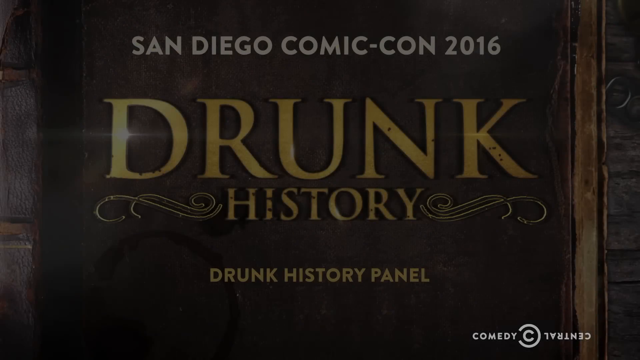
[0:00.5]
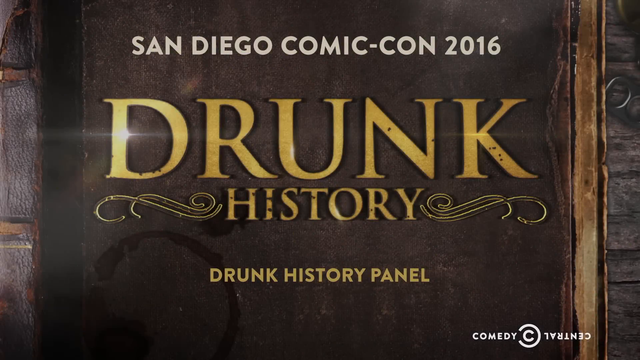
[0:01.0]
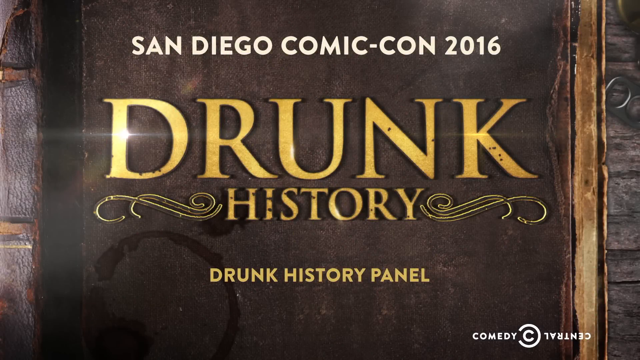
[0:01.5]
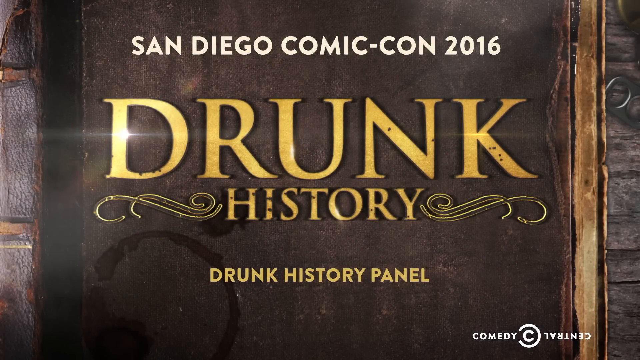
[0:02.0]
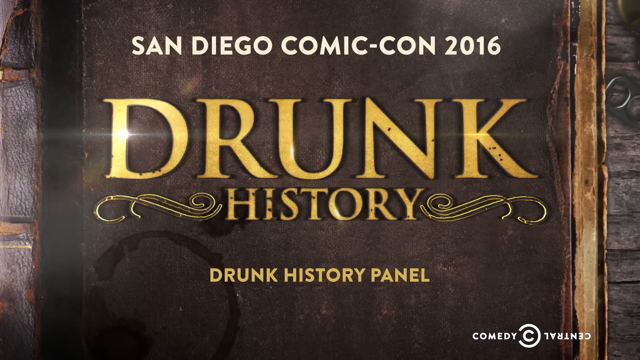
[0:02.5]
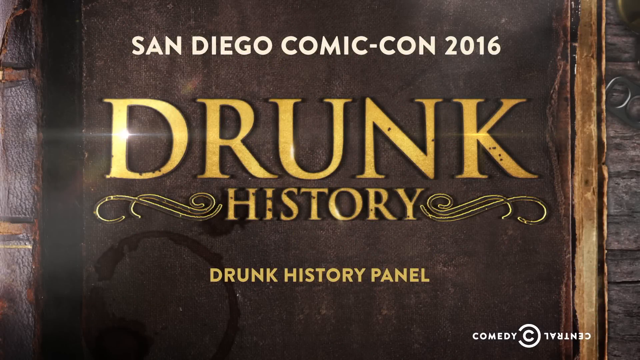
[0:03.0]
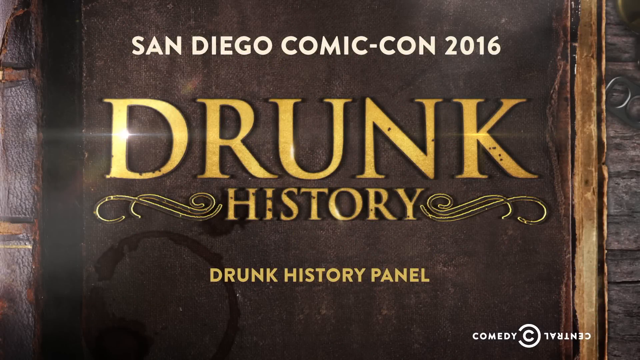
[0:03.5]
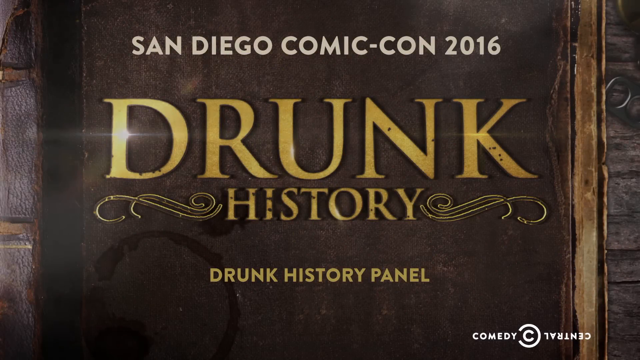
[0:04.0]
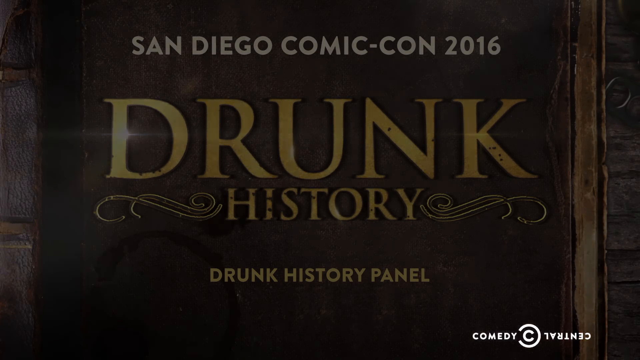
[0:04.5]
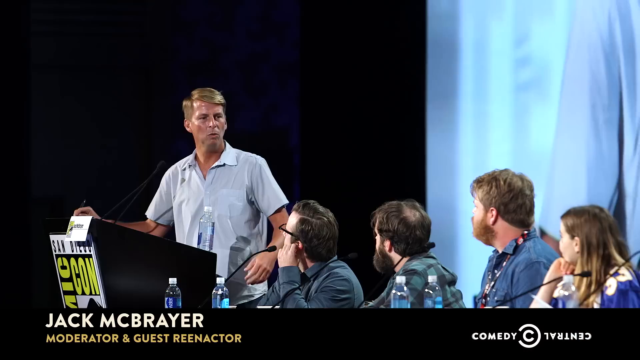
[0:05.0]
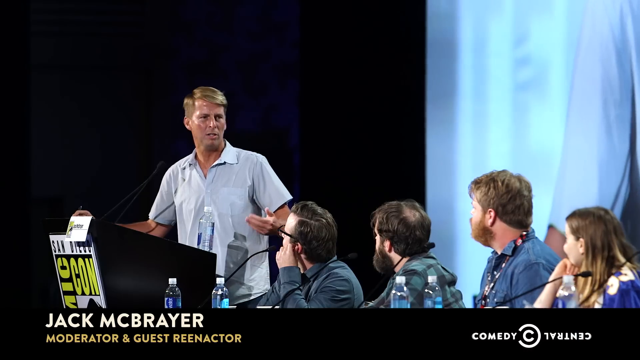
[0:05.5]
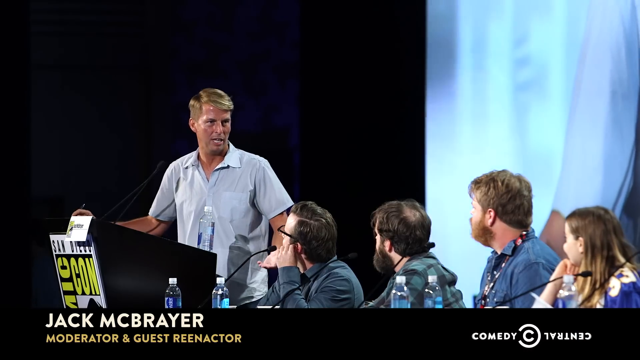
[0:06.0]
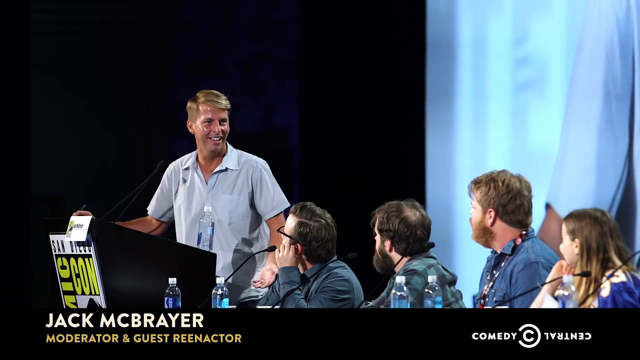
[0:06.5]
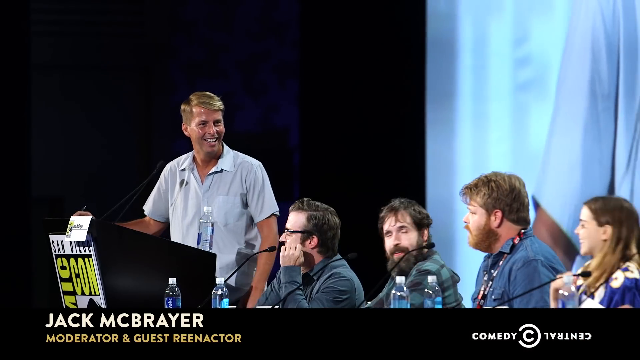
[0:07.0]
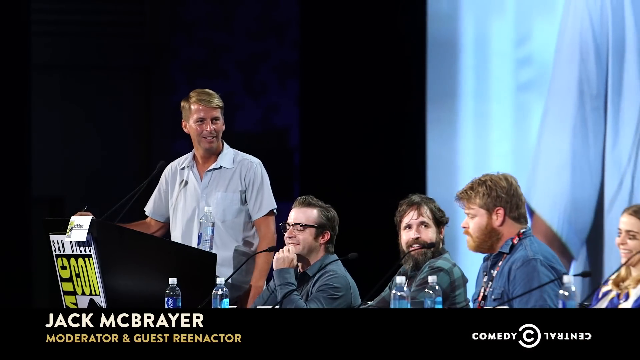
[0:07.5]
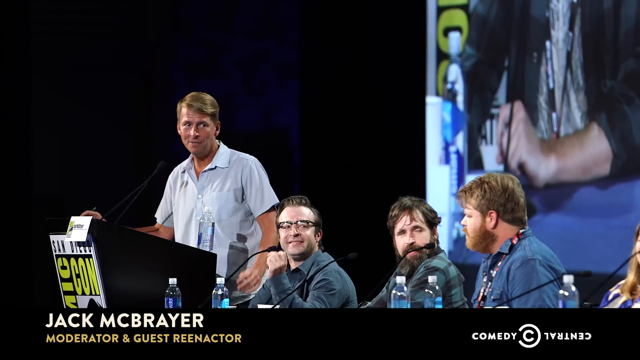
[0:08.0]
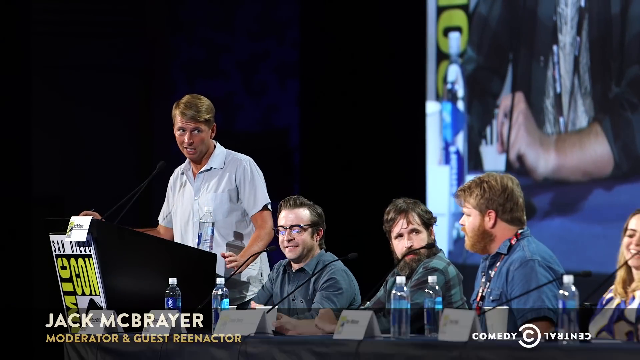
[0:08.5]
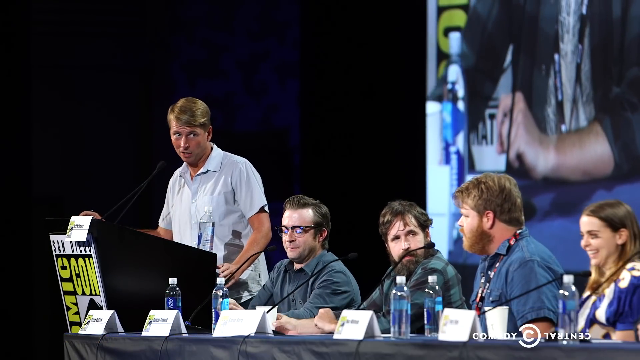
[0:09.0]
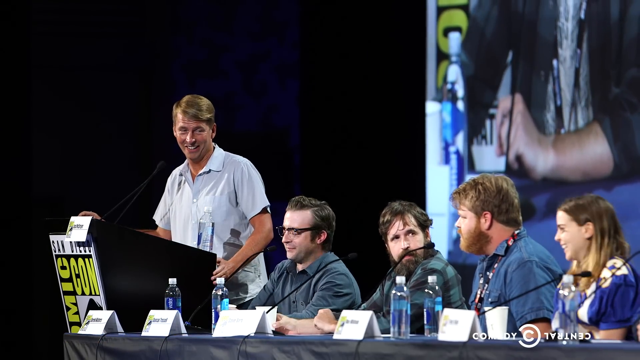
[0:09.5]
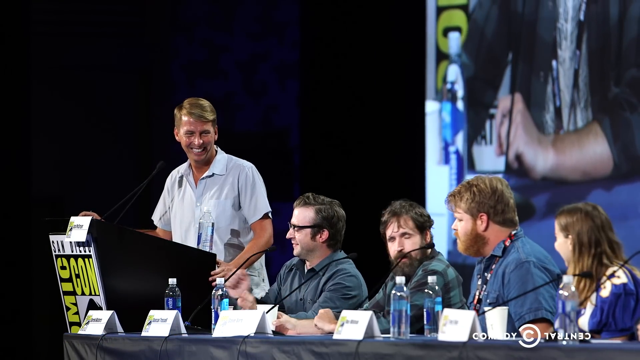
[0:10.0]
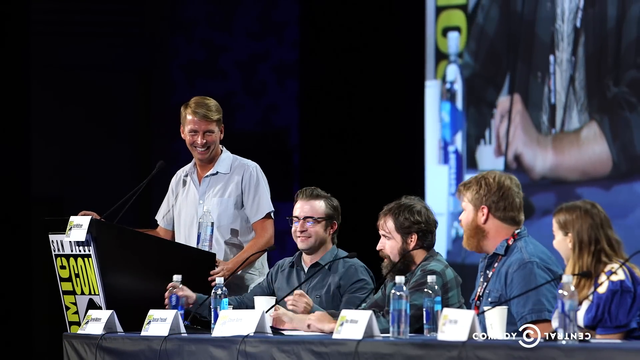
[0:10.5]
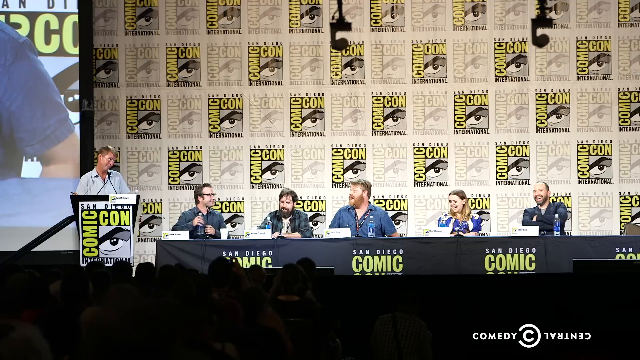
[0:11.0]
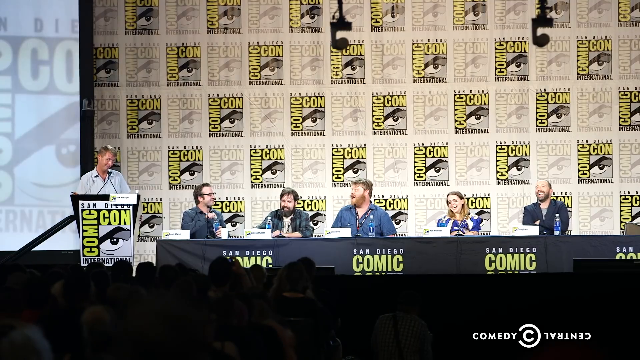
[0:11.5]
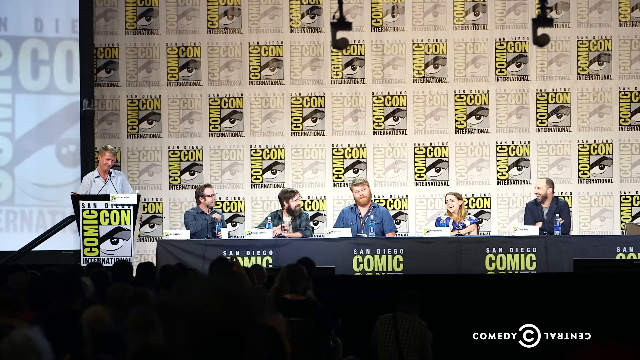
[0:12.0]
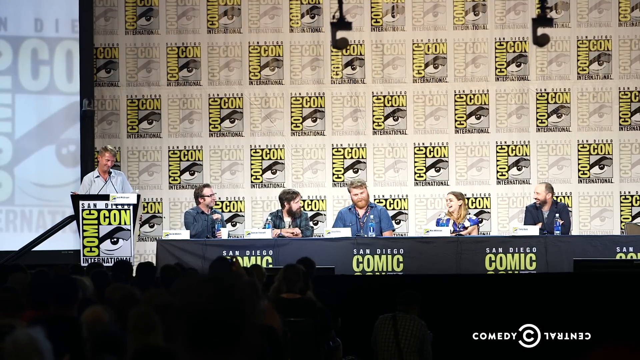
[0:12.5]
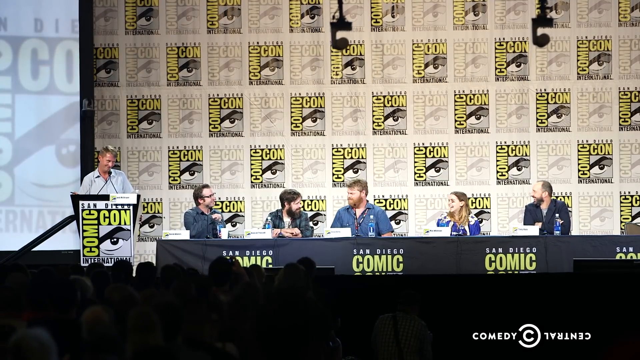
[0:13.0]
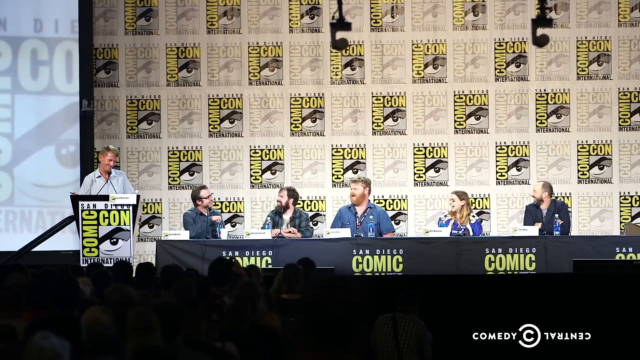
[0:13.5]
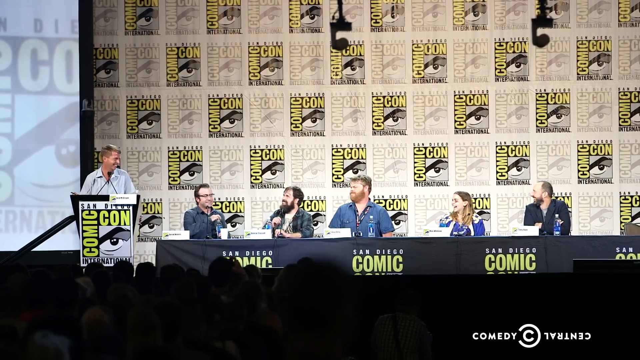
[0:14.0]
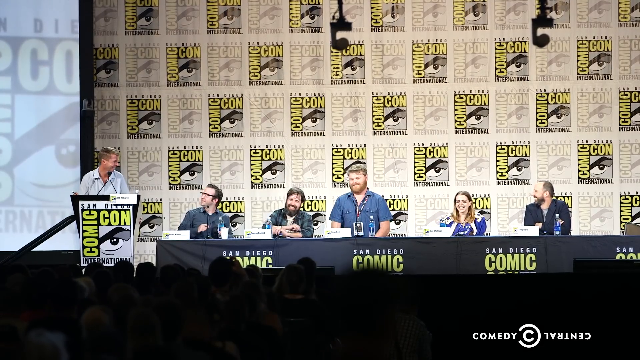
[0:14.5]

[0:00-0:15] The video opens on what looks like a wooden book. Across the top, in white, it says "San Diego comic-con 2016"; across the front, in gold with black trim, it says "drunk history"; and below that it says "drunk history panel." It then cuts to a panel of people. One man is on the left side, facing forward and a little to the left but looking back to the right. He is Kenneth from 30 Rock, with blonde hair and a blue shirt, and he talks into the microphone, laughing and smiling as he speaks to the others. In front of him is a podium that is black on the side and white on the front, where it says "comic-con" in yellow. To his right are four people, with the woman on the end. The first three men wear gray shirts and are seated with microphones in front of them. The woman has blonde hair, and another man at the end has what looks like a sports coat with white on it. The view pans out to a front view showing all of them sitting there. Behind them, a big covering running from the right over to the left takes up about 75% of the frame and shows "comic-con" repeated over and over in small squares. A little bit of a screen is visible on the left side, and at the bottom a few people's heads can just be seen, but it is very dark.